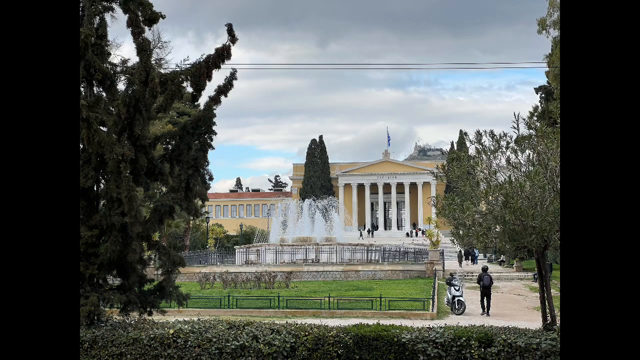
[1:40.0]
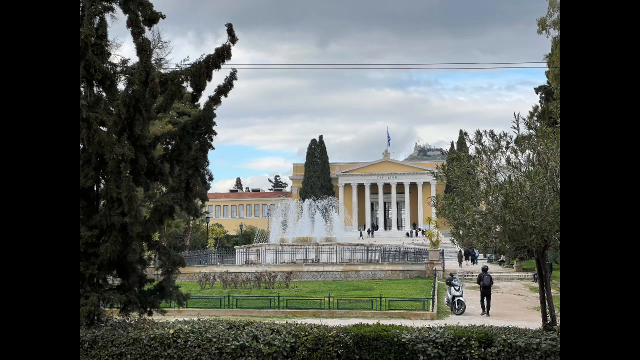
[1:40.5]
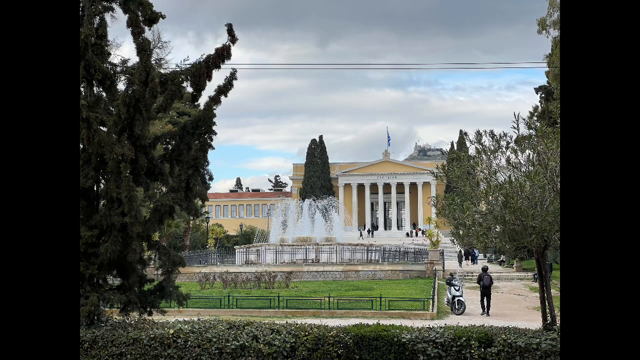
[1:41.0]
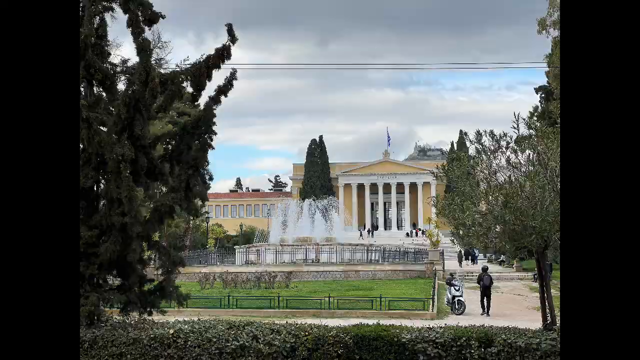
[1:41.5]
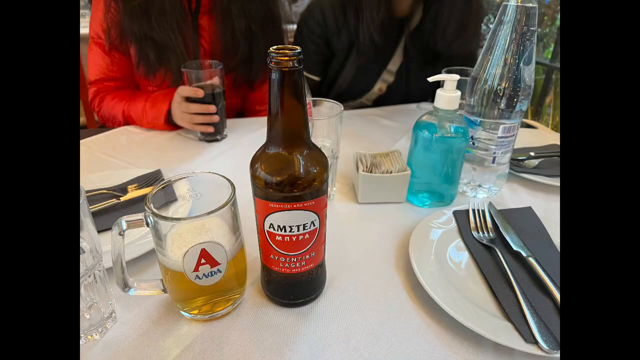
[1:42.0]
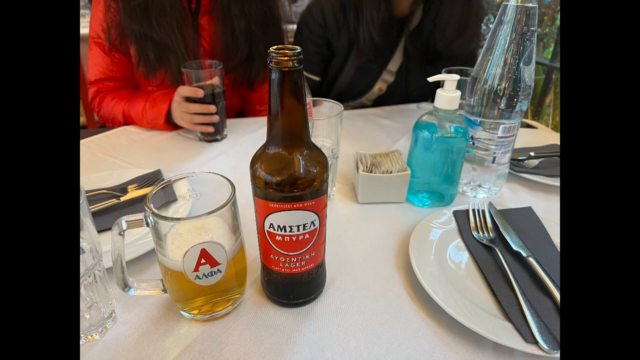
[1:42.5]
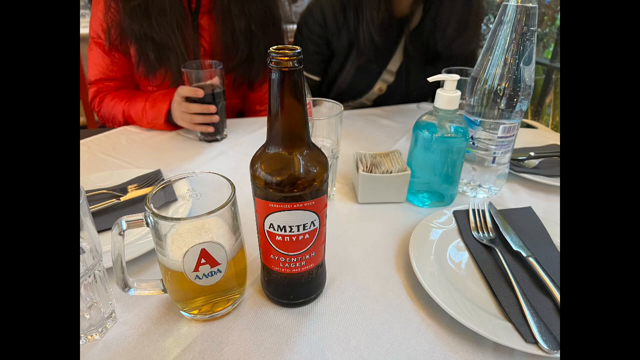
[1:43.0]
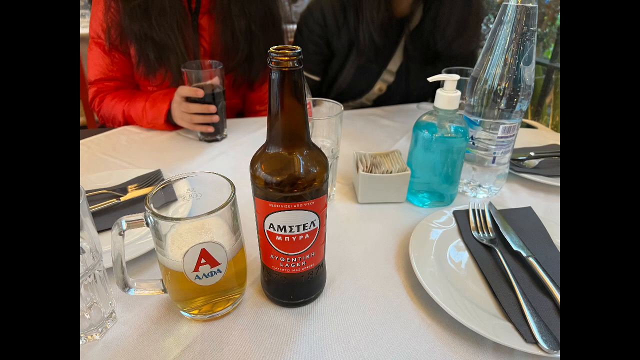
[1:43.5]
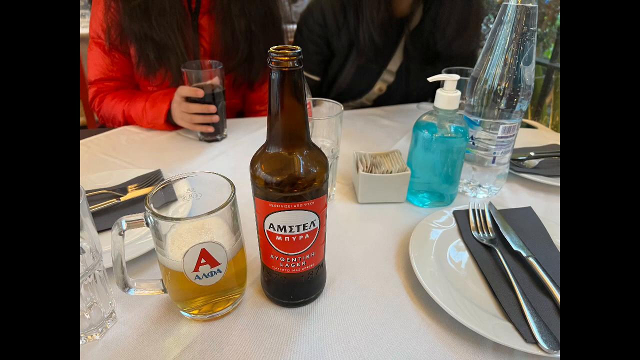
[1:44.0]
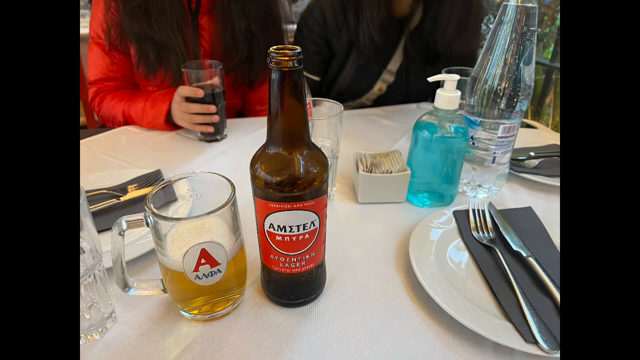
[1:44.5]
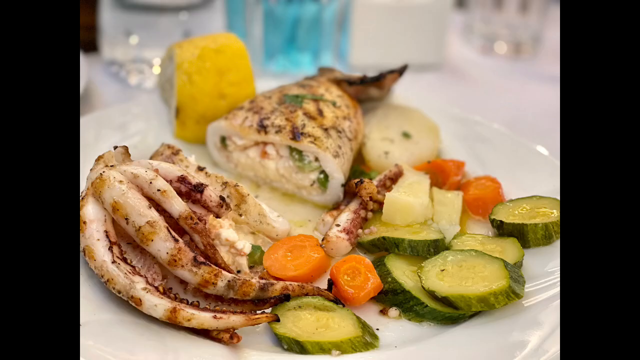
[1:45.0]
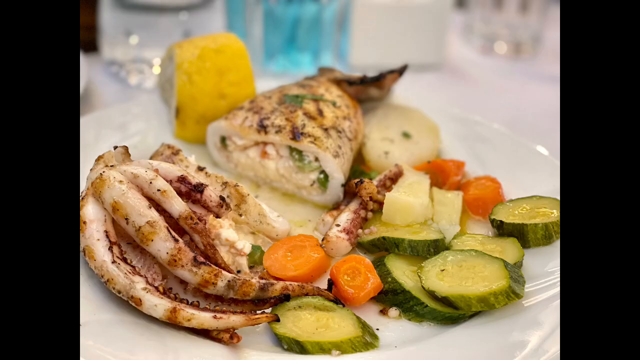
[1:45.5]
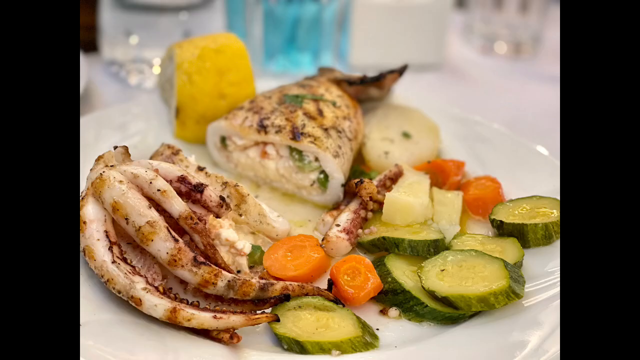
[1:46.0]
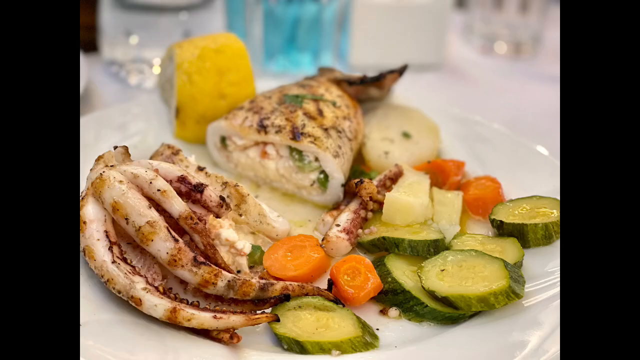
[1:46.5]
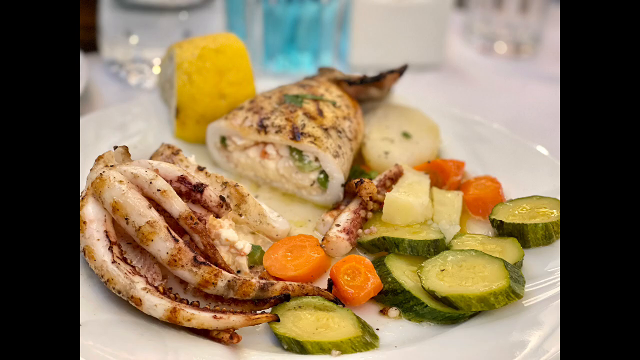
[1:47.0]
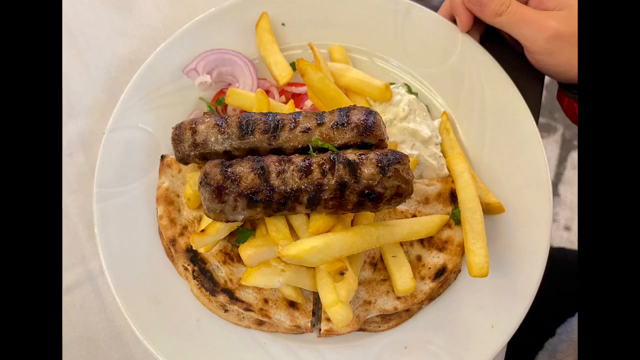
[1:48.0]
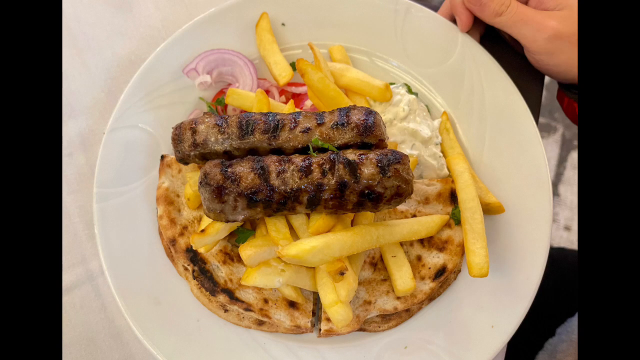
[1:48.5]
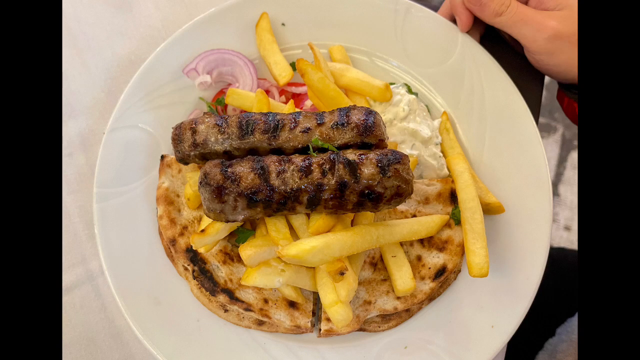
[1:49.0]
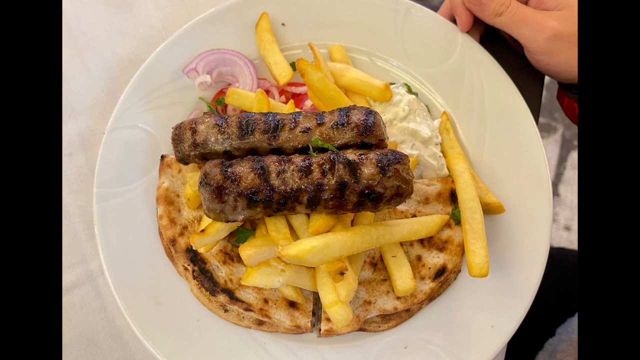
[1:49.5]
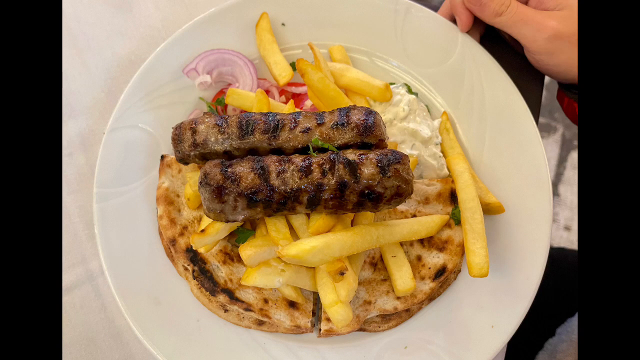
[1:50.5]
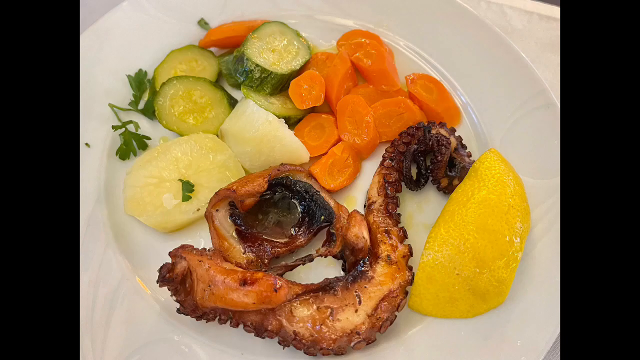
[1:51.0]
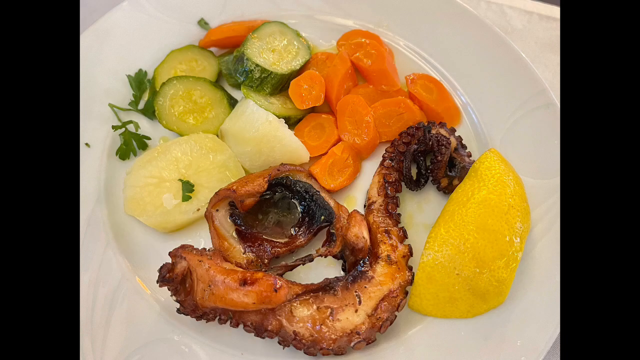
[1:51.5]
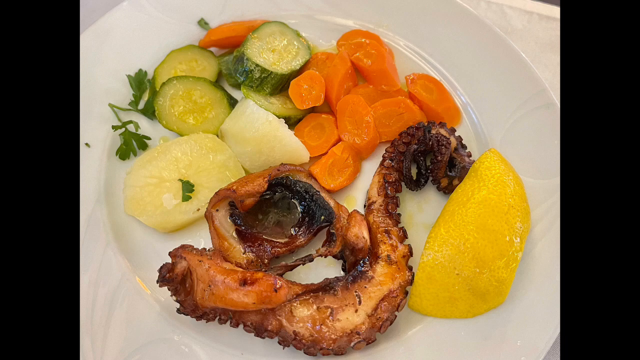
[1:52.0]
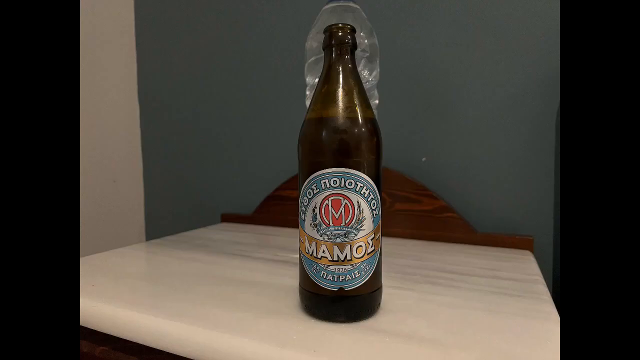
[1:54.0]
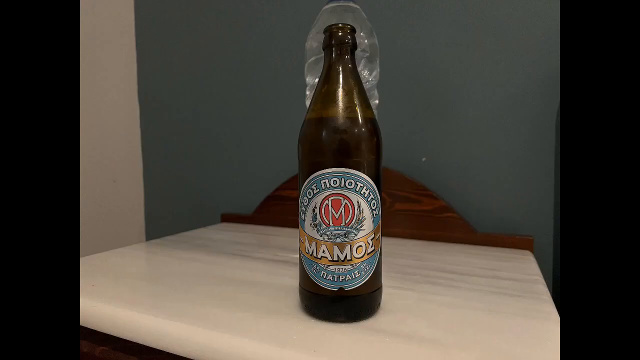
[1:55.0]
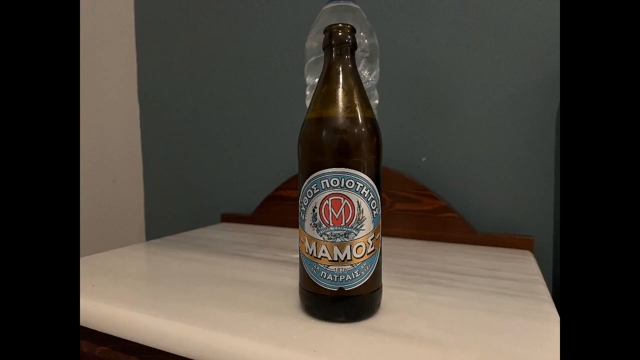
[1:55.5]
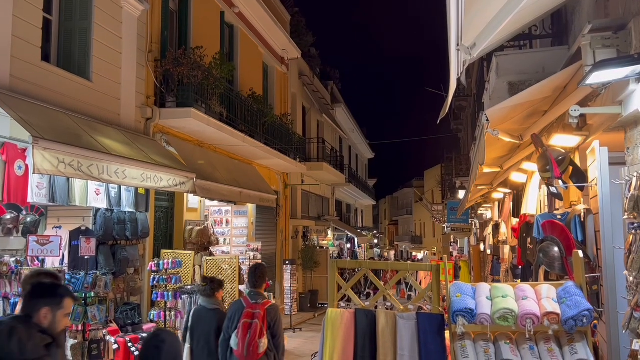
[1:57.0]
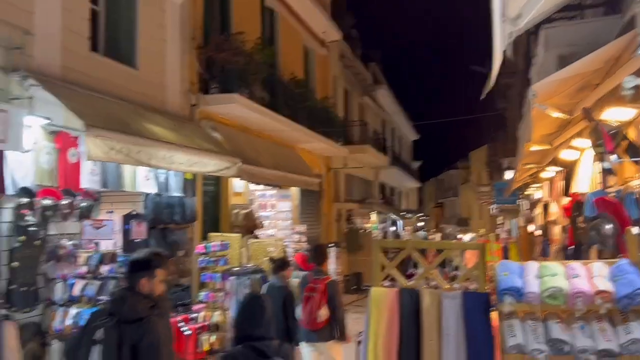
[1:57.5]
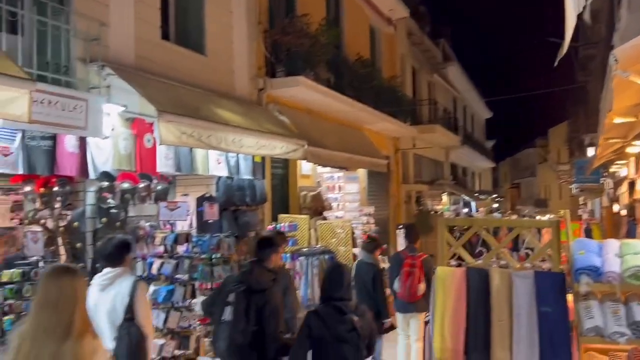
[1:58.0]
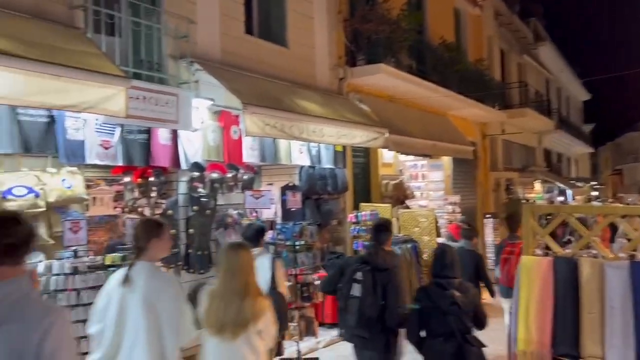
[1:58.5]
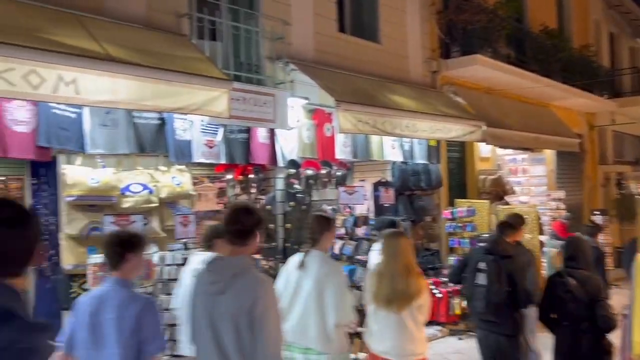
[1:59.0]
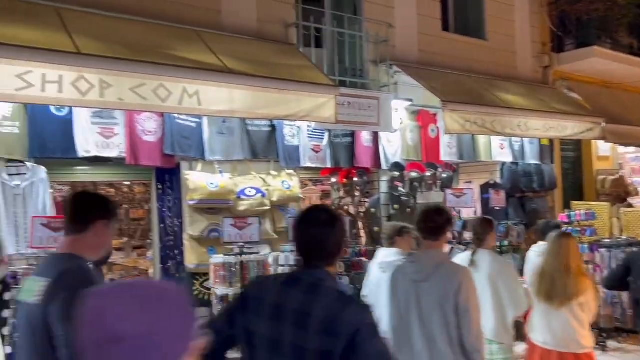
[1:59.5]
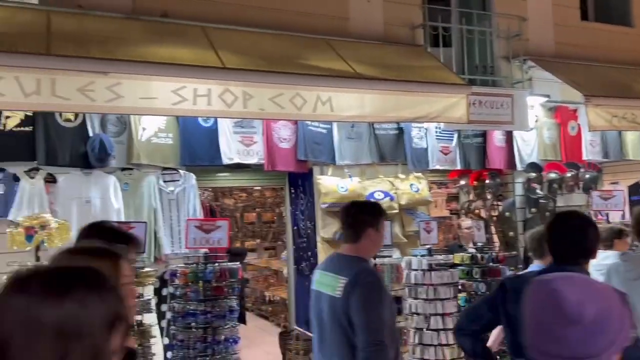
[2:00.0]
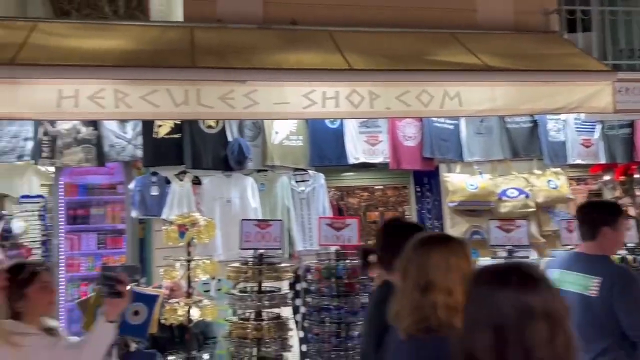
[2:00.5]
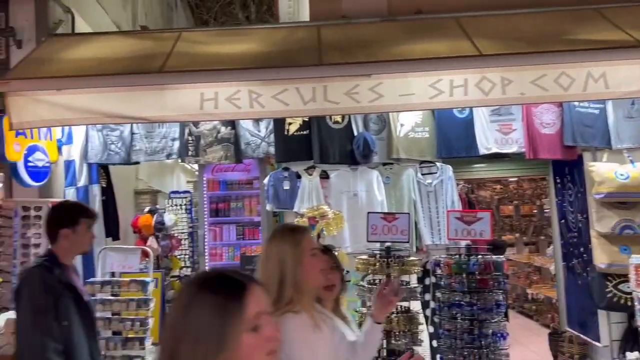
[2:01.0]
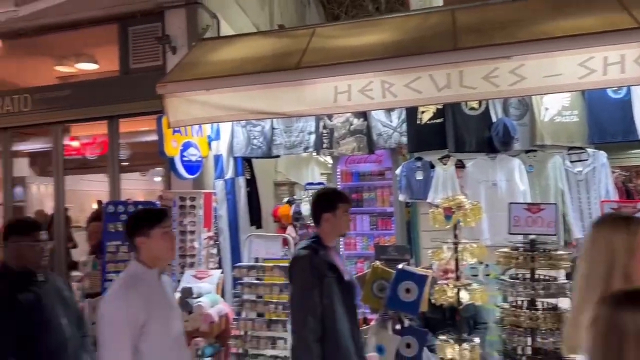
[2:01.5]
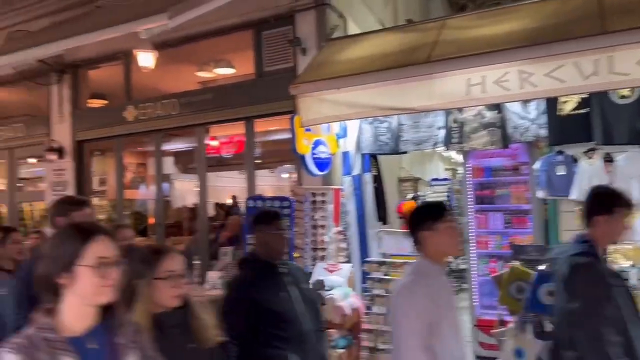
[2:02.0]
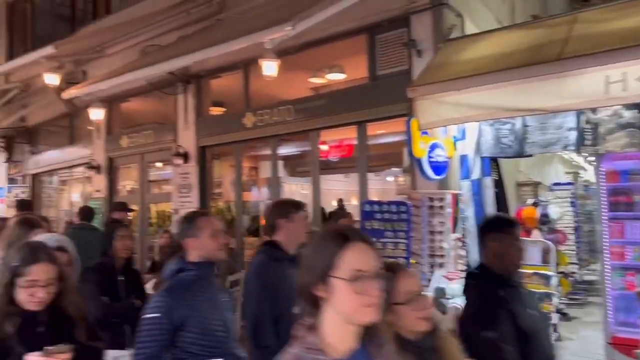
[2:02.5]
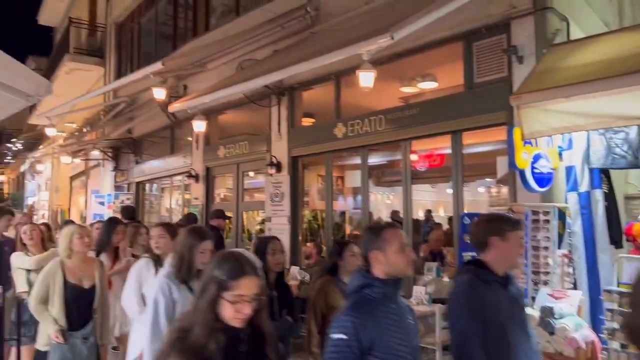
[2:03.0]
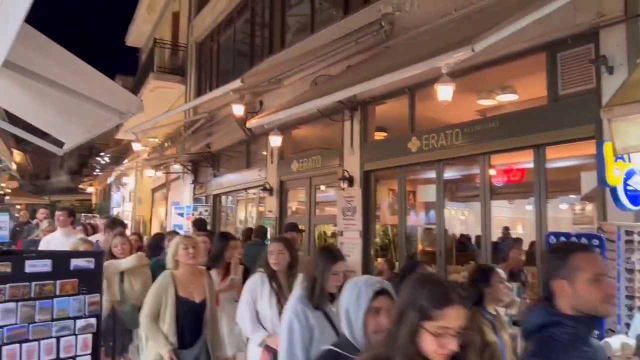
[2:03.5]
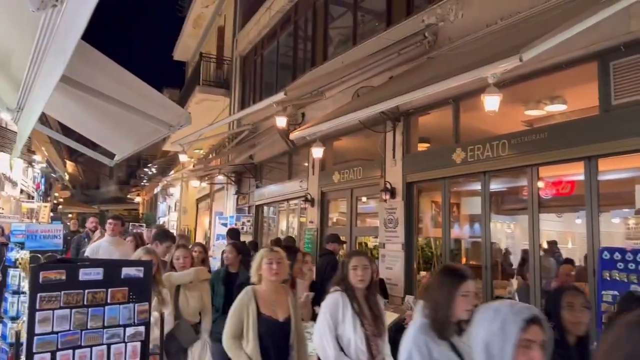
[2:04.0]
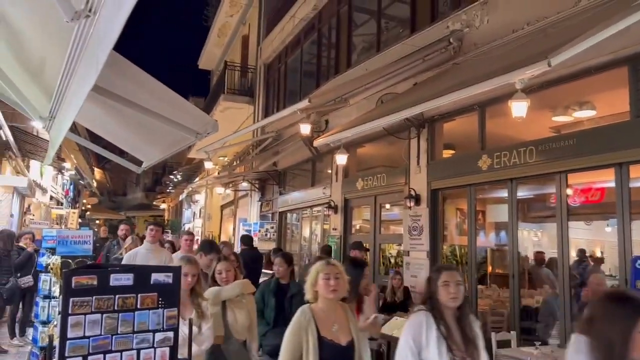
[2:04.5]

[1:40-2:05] The stately house with columns in front, which might be a government building, has fountains in front of it. Still photographs of food and drinks follow, apparently in restaurants. A table holds a bottle of beer with a mug of beer next to it. A woman dressed in red holds a glass, and there are a bottle of hand sanitizer, some water, plates and utensils on a white tablecloth. A close-up shows a plate of seafood with what looks like octopus and fish, plus vegetables: carrots, zucchini and squash. Another plate has French fries topped with what may be sausages or possibly gyro meat, with bread, possibly pita bread, underneath the fries on a white plate. Another seafood plate, similar to the first, holds a large cooked octopus leg, a wedge of lemon, and carrots and zucchini with parsley on the side. Then comes a close-up of a single bottle of beer. The final shot shows a market at night, apparently an Athens outdoor market, with lots of people walking through a pedestrian walkway.